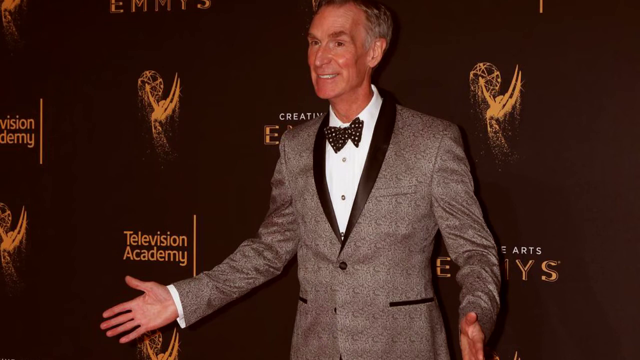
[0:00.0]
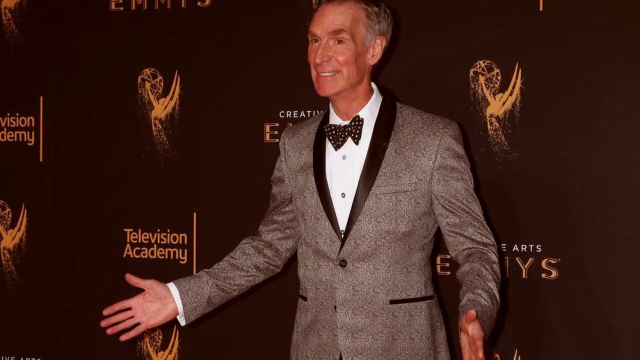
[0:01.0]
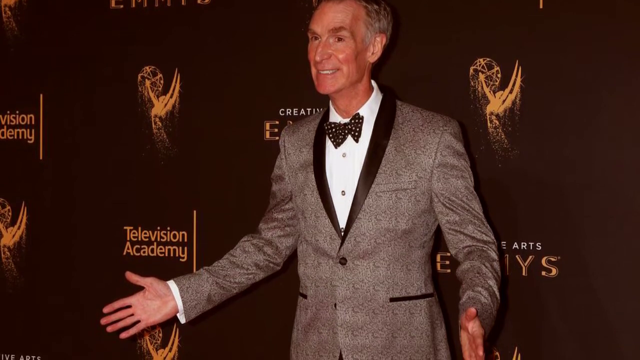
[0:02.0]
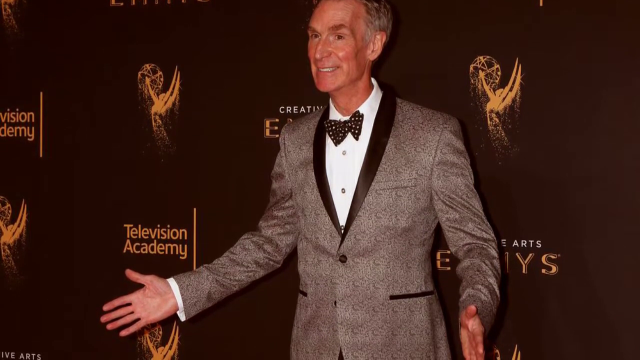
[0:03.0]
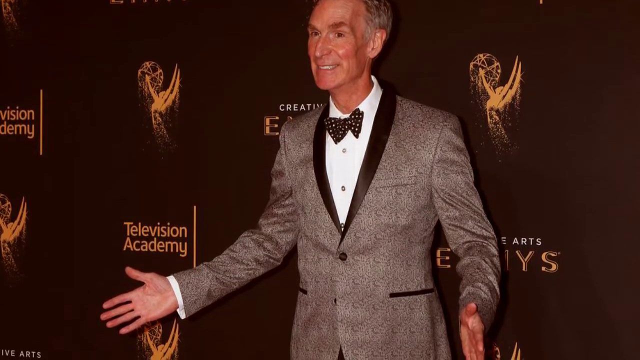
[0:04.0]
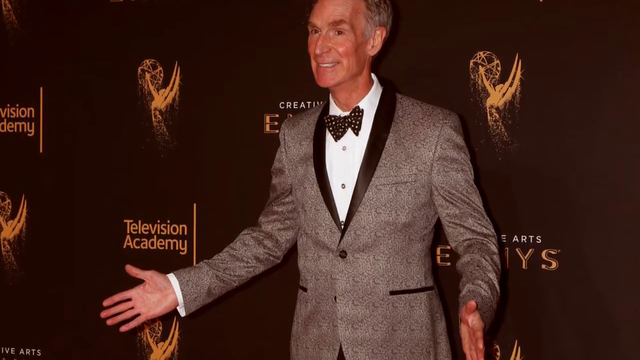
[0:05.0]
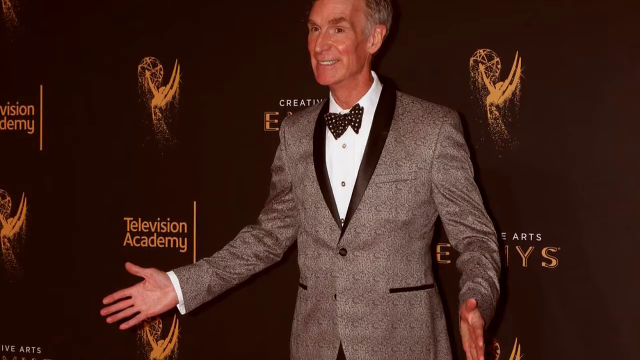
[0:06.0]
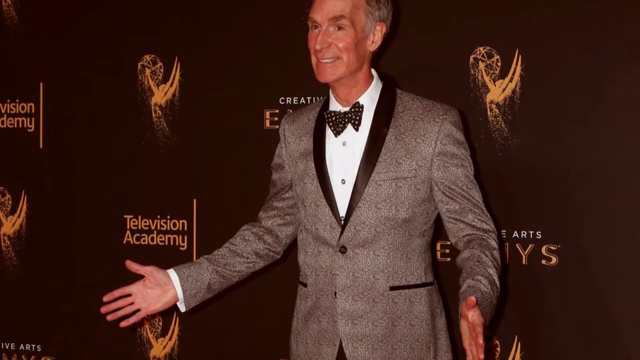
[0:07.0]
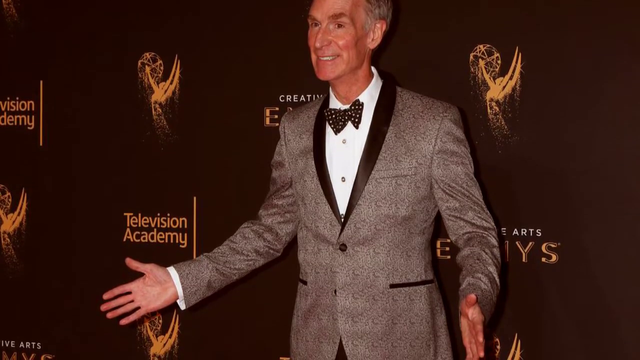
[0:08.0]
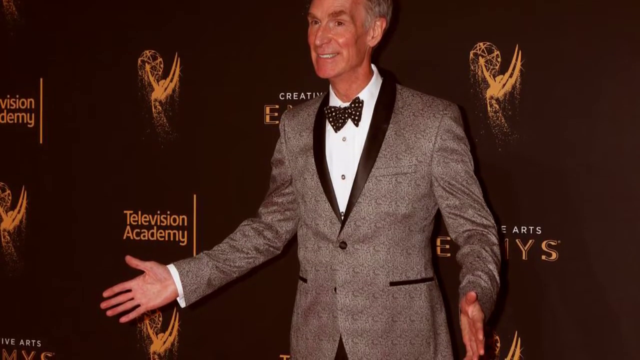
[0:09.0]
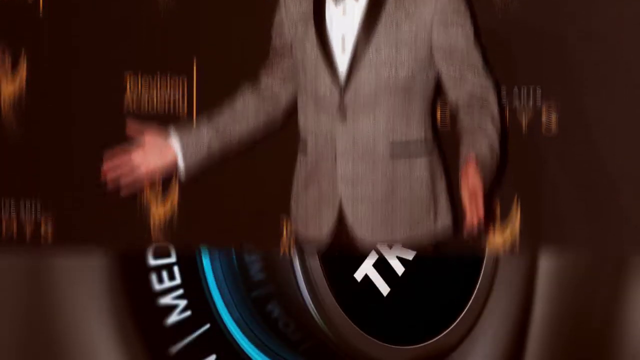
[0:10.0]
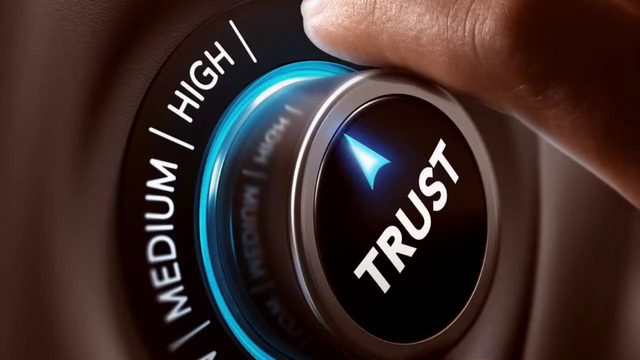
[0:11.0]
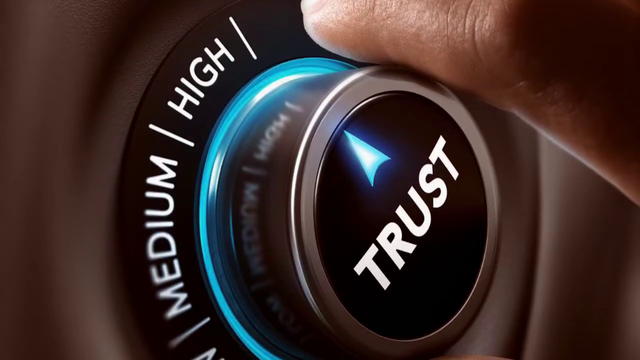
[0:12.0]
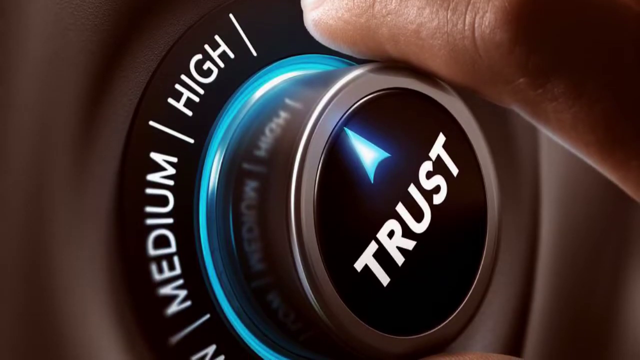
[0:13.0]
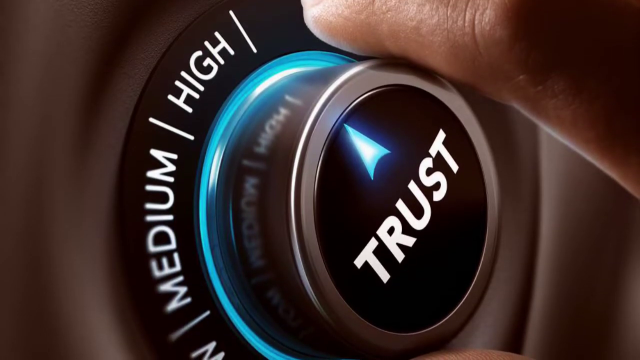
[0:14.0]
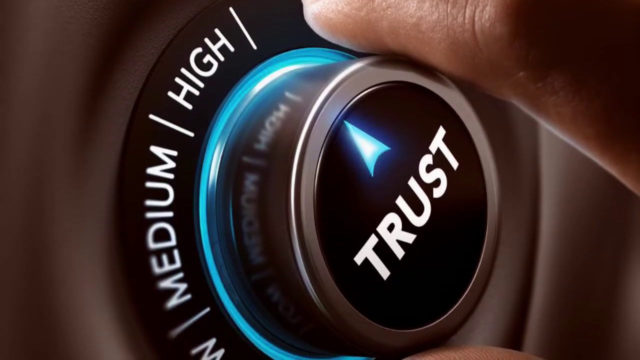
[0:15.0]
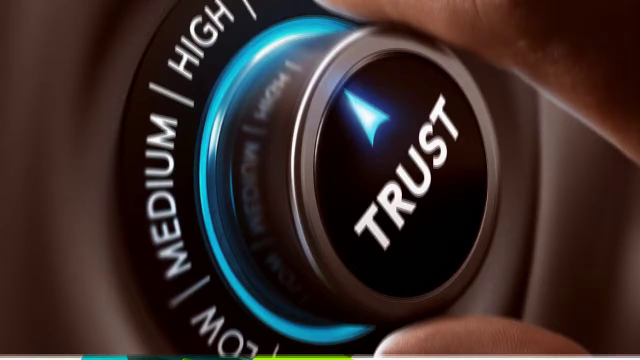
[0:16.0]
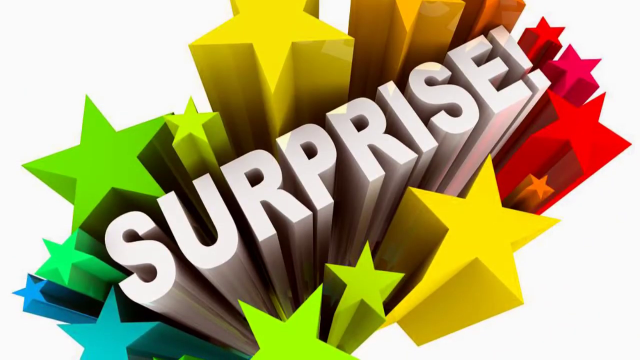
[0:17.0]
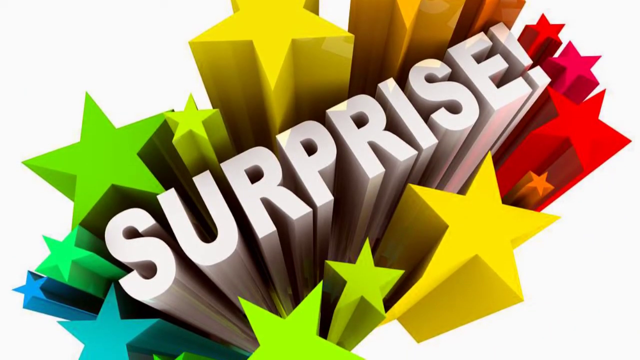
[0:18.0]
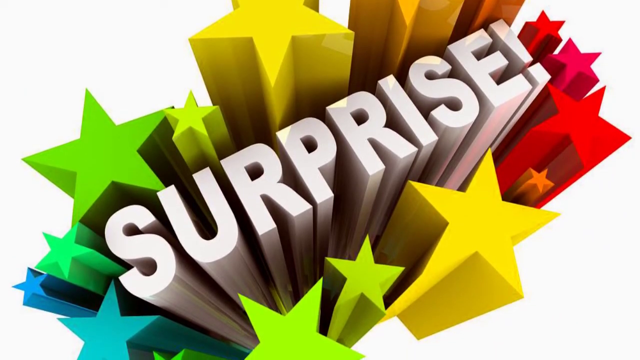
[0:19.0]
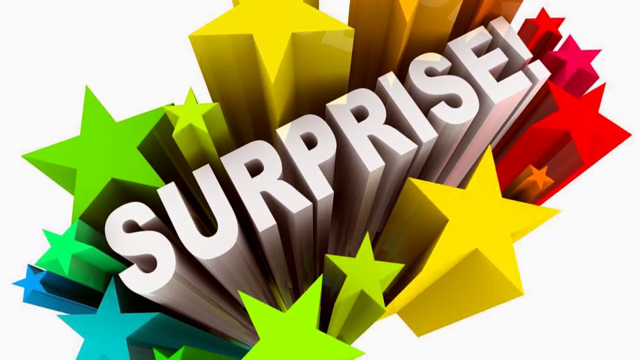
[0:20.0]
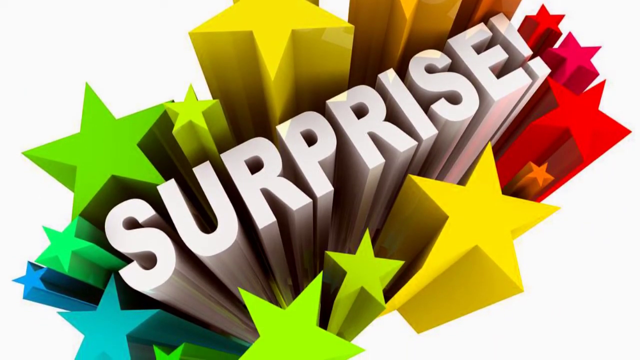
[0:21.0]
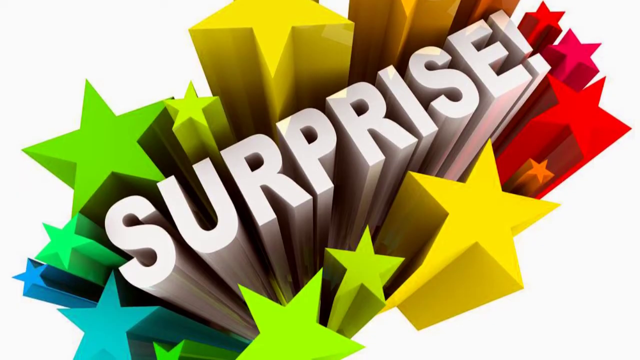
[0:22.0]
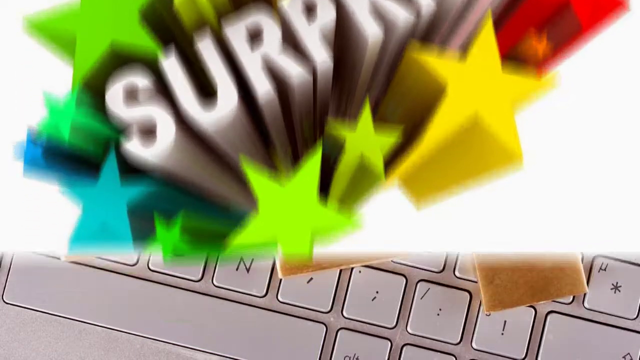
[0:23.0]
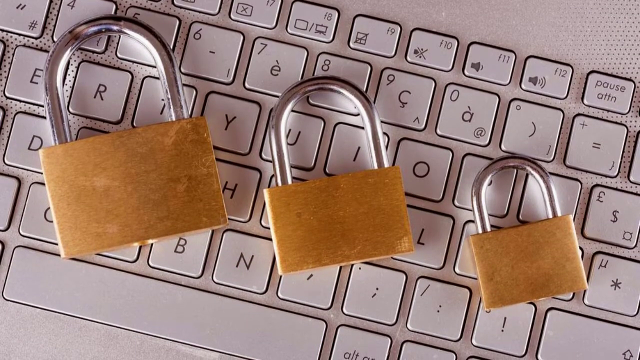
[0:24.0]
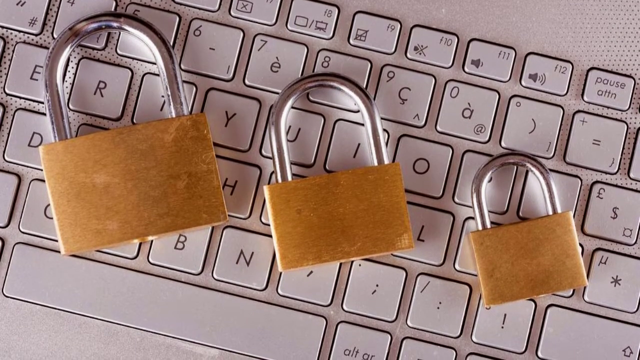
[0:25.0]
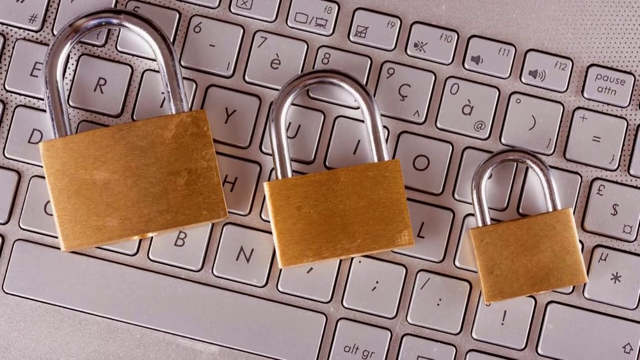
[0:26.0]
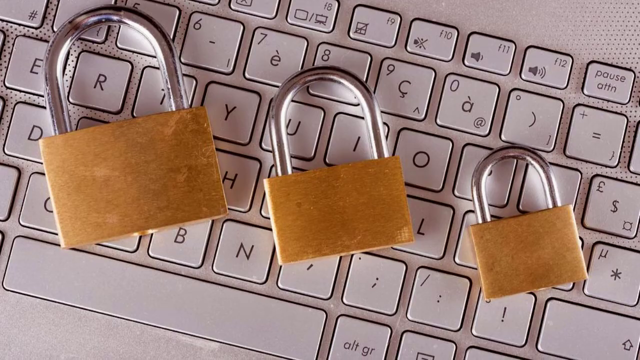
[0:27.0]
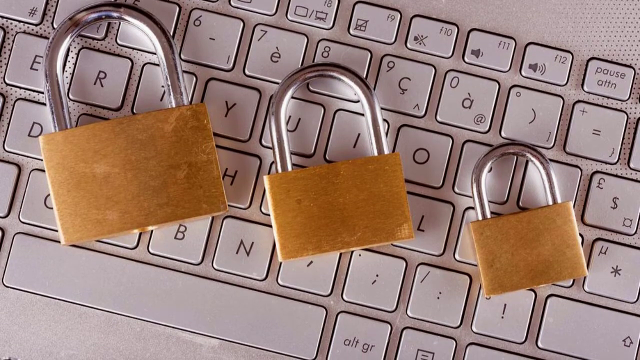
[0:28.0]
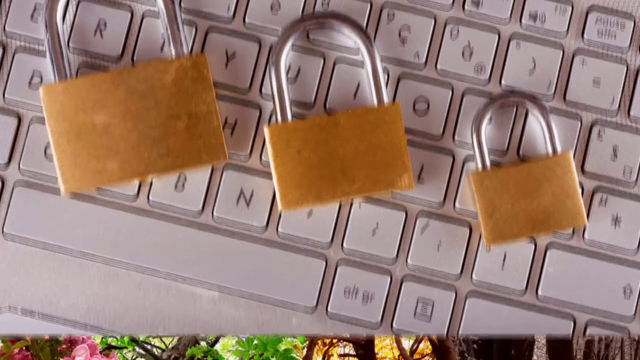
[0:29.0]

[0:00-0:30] Bill Nye, the so-called science guy, appears with gray hair. He wears a gray blazer or jacket over a white dress shirt with a black and white polka-dot bow tie, and he has his hands out with his palms up. He stands in front of a wall that says "Television Academy" in gold text. There is an Academy Award-looking trophy, or some kind of trophy, which appears to be an angel holding a globe in his hand. The video then changes to a button, knob or dial with "trust" on the front in the center on a black background; the dial itself is silver. A label around the dial, near where it connects to whatever it is attached to, says "medium" and "high" in white text. Somebody's finger is on top of the dial, and a little blue glowing arrow is above the word "trust" in the center of the dial's front.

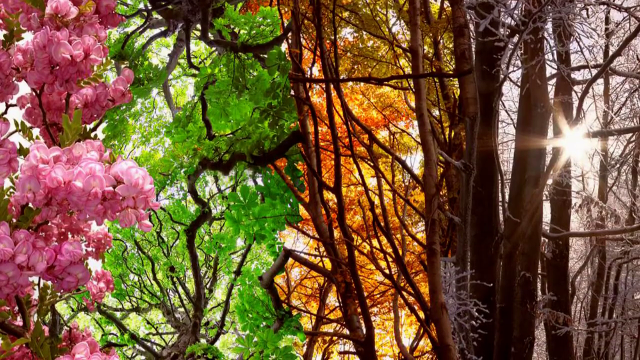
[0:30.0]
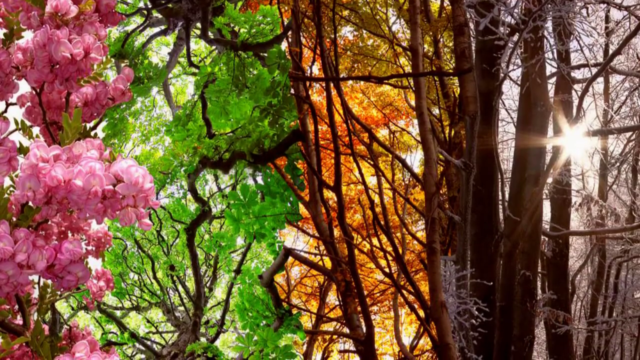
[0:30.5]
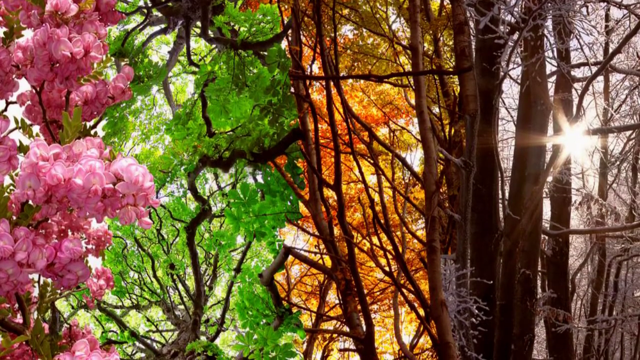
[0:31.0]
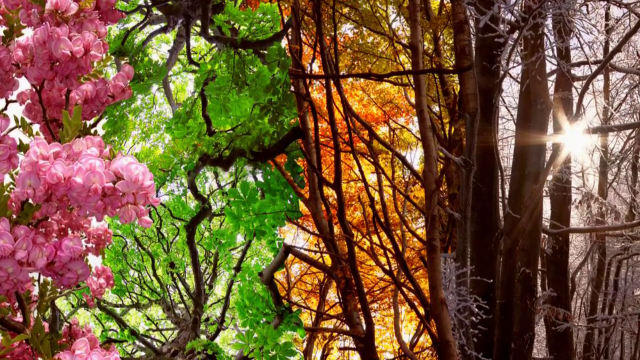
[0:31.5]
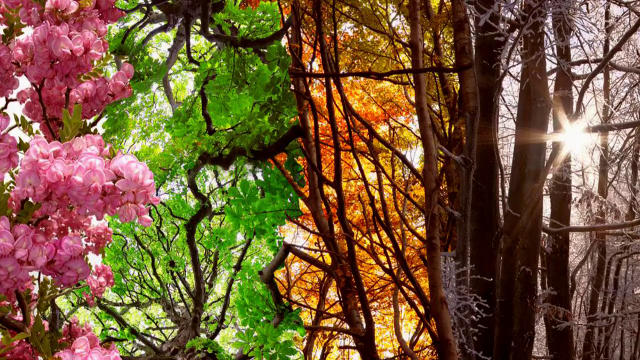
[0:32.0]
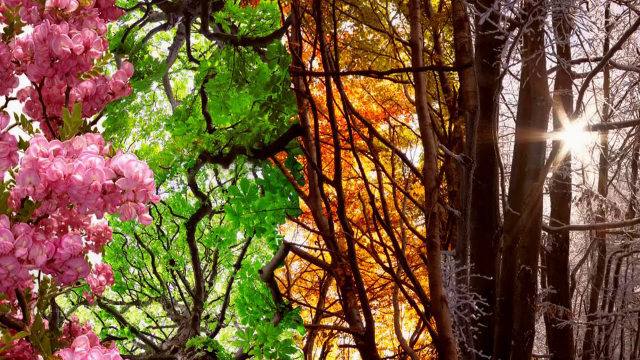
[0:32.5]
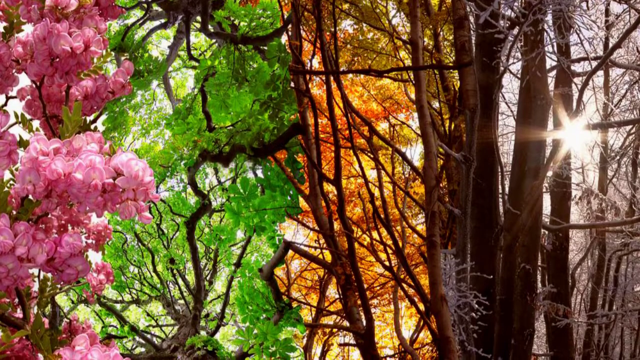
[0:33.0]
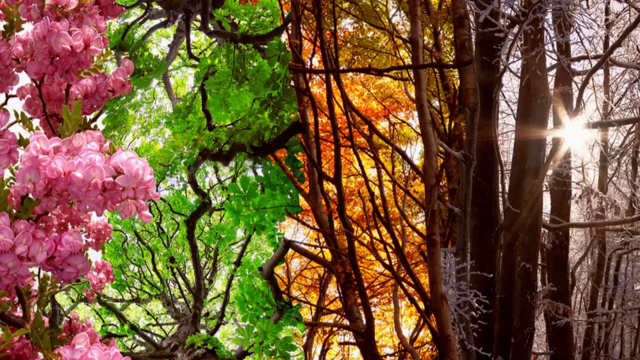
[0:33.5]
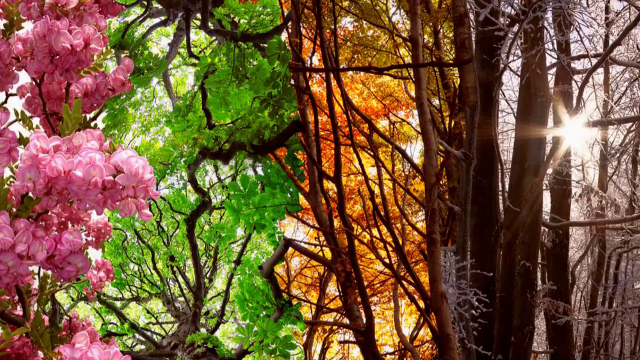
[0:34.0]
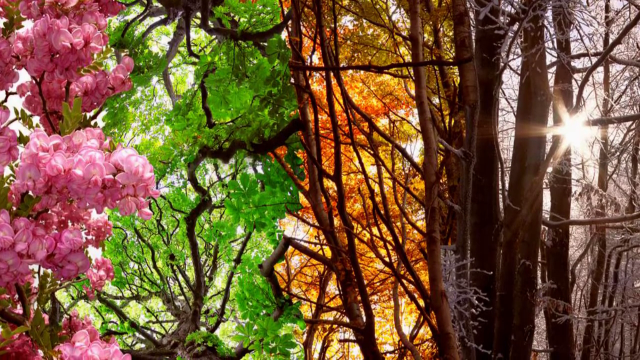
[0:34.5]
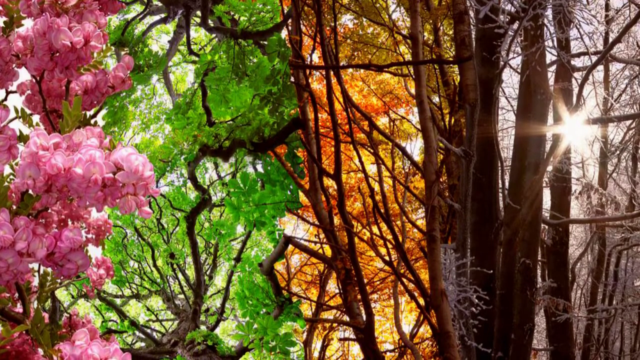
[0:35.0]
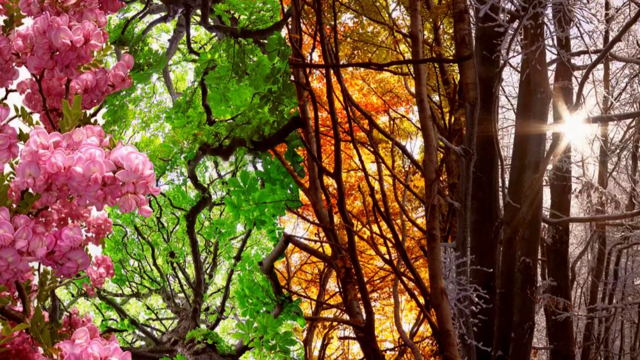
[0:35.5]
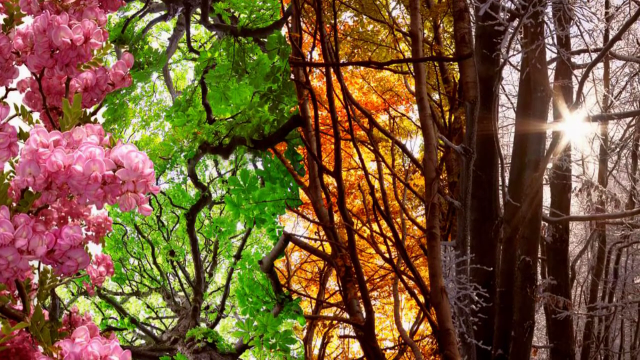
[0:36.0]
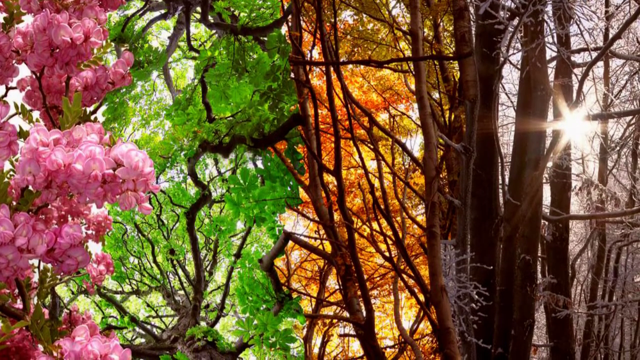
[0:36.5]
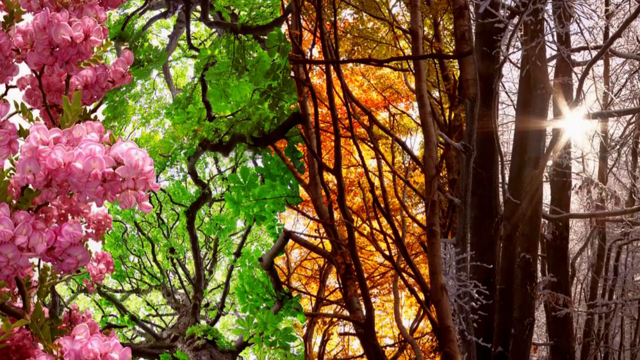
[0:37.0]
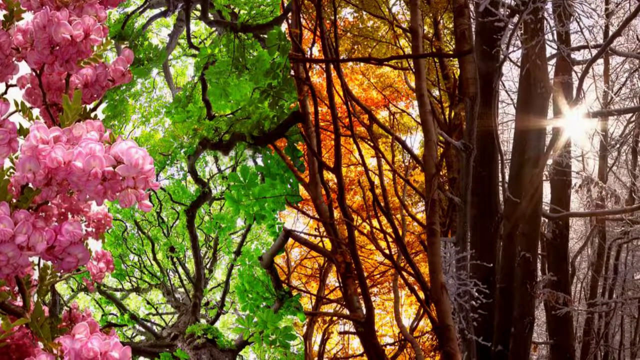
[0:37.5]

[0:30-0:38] The video appears to show a collage of different trees in different seasons. On the far left is what appears to be a tree with cherry blossoms or pink flowers. Next to it in the collage is a tree with green leaves, and next to that a tree with yellow or gold leaves. The trees on the far right have no leaves but have frost or ice on them, with the sun shining through. The video plays for several more seconds and then ends.